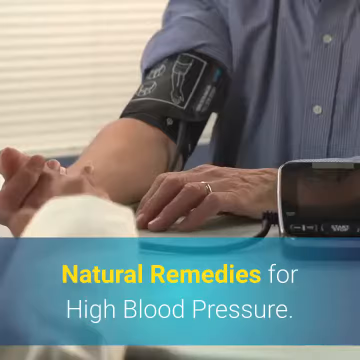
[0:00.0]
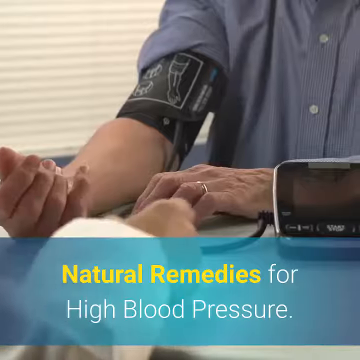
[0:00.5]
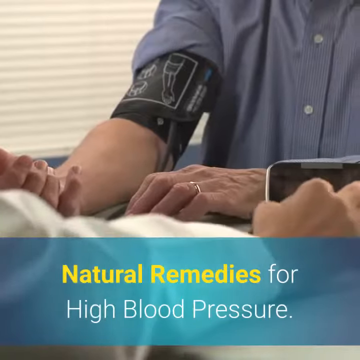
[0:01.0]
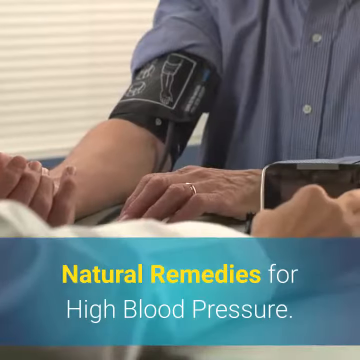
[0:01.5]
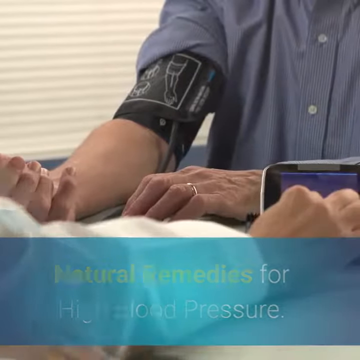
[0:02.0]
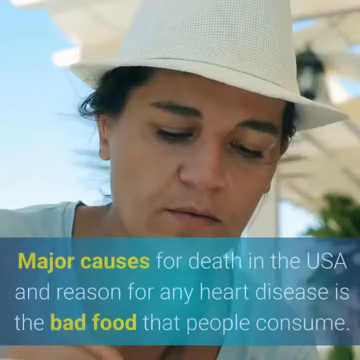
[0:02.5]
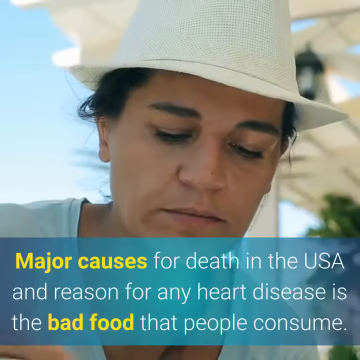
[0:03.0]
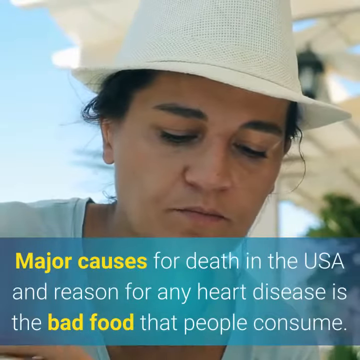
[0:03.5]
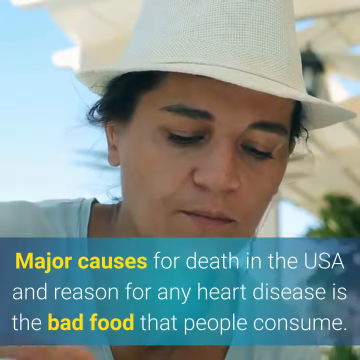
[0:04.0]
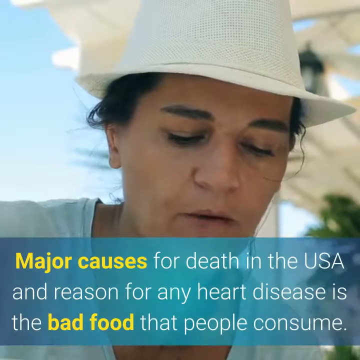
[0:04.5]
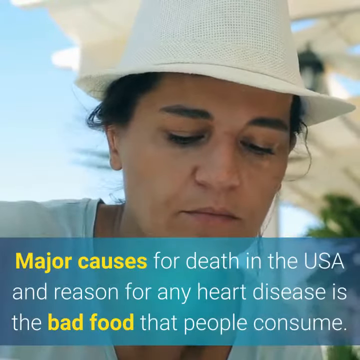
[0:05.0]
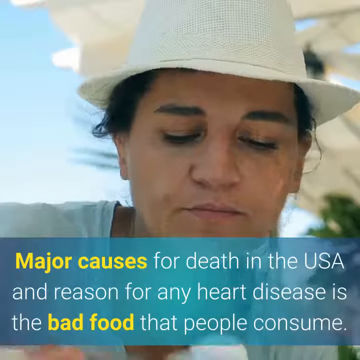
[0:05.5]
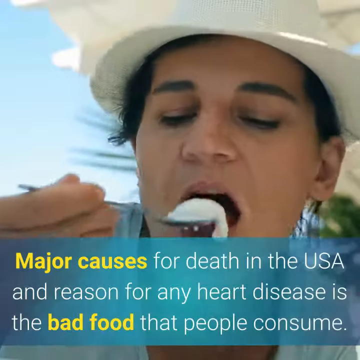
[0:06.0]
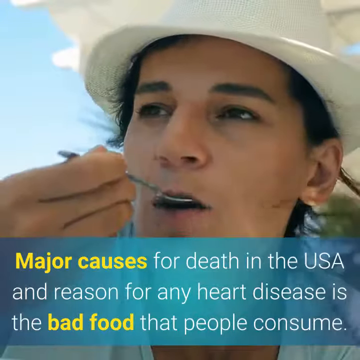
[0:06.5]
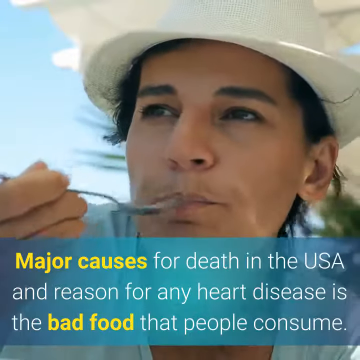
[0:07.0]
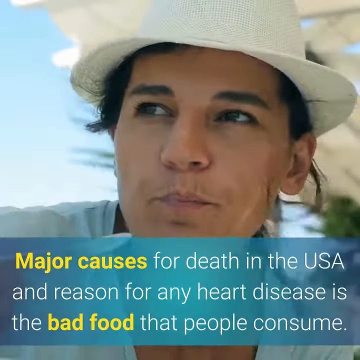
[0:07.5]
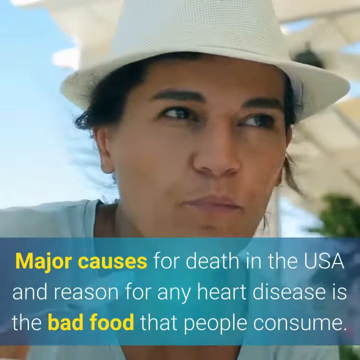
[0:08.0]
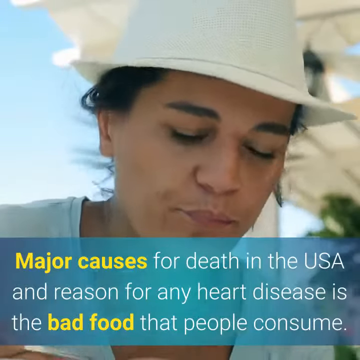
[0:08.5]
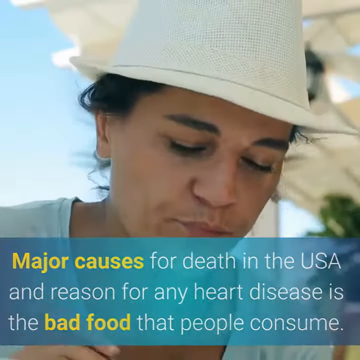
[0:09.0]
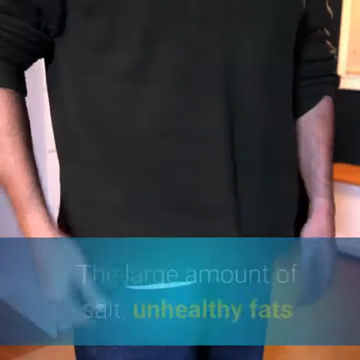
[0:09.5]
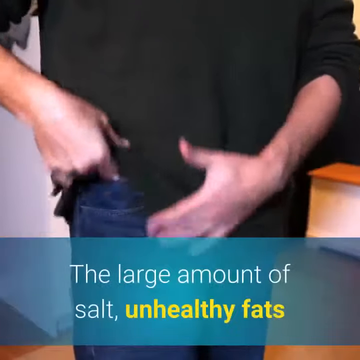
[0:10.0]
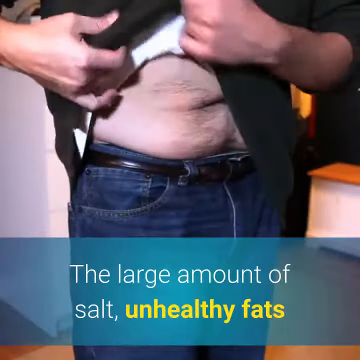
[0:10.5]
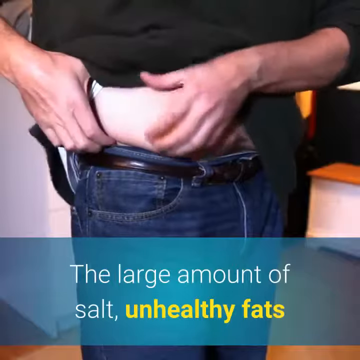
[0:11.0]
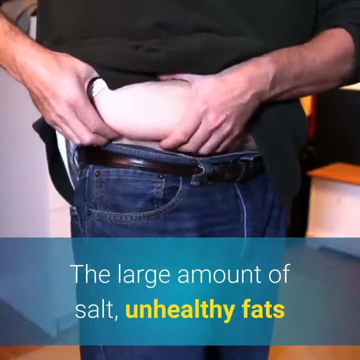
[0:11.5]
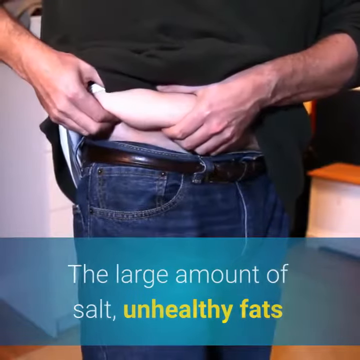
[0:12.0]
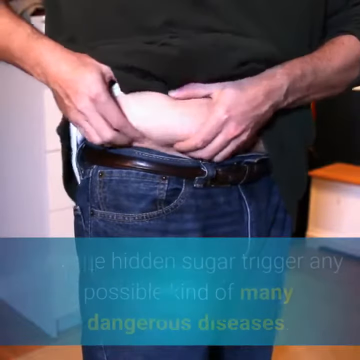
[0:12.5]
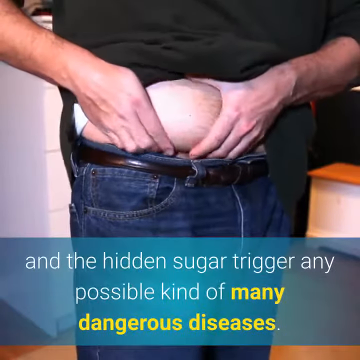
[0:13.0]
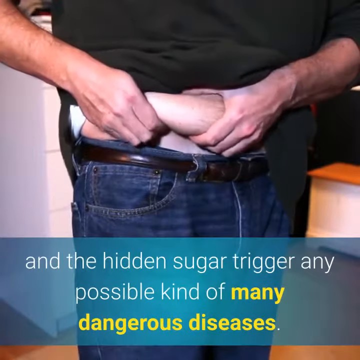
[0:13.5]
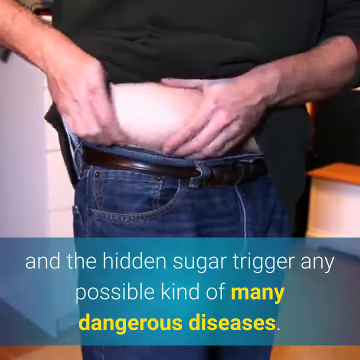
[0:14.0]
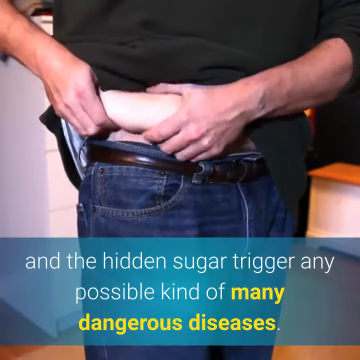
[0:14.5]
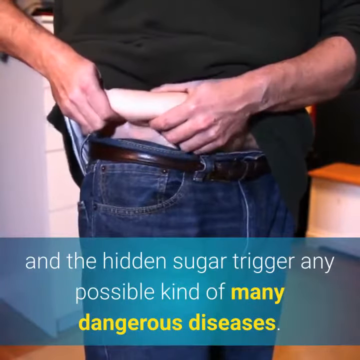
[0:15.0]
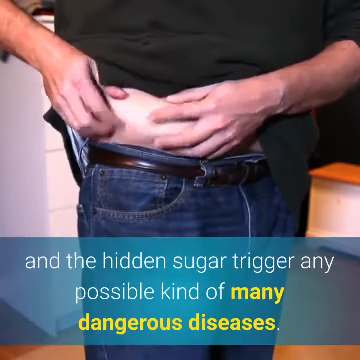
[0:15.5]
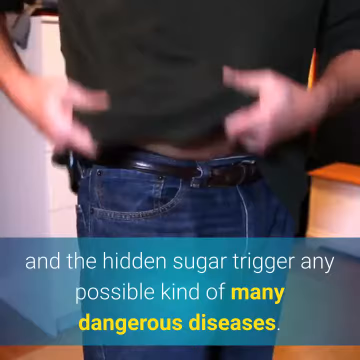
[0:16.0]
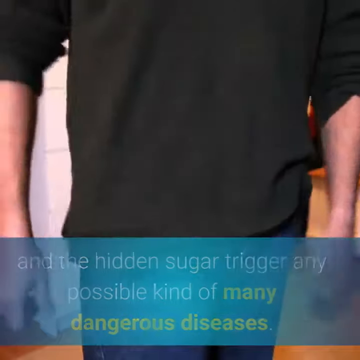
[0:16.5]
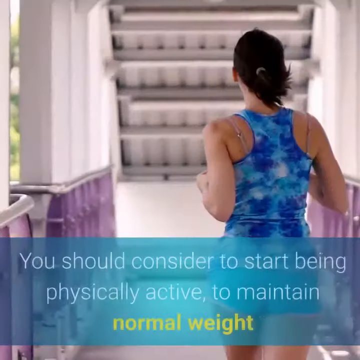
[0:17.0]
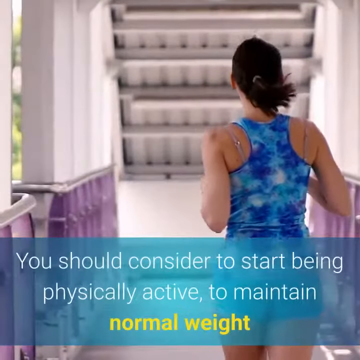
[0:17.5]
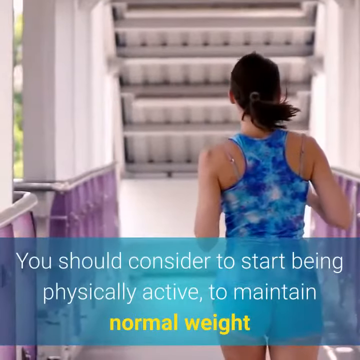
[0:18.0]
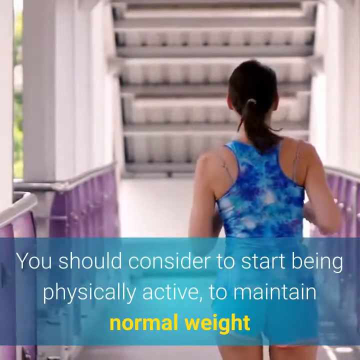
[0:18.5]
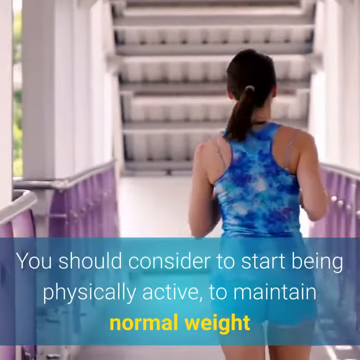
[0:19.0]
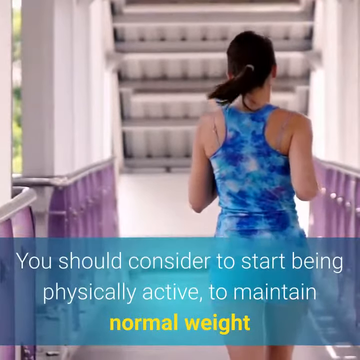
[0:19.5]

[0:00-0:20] A man has a blood pressure machine on him. He wears a brown button-up shirt, and his hands are visible on the table, but his face is not. A little device is lying on the table too. A blue banner with white and yellow text reads "natural remedies for high blood pressure," and a doctor's arm seems to come into view as a screen then lights up. Next, a woman in a white hat is outside, with trees in the background. A blue banner with white and yellow text reads "major causes for death in the USA and reasons for any heart disease is the bad food that people consume," and she is eating what looks like yogurt while the wind blows her hair. Then a man in a black sweatshirt lifts up his shirt, seemingly to show his stomach and the fat that folds over his pants. A blue banner with white and yellow text reads "the large amount of salt, unhealthy fats and the hidden sugar trigger any possible kind of many dangerous diseases. You should consider to start being physically active to maintain normal weight." A girl in a blue tie-dye shirt, her hair pulled back in a ponytail, runs in slow motion; she is very fit.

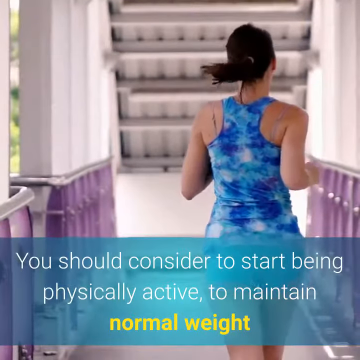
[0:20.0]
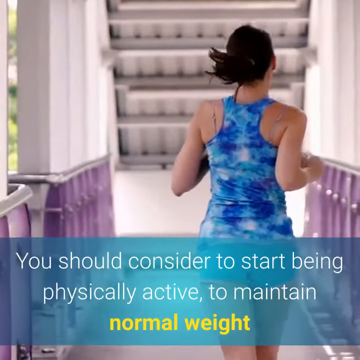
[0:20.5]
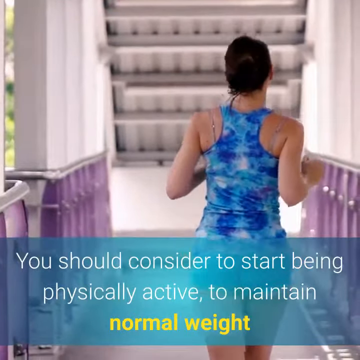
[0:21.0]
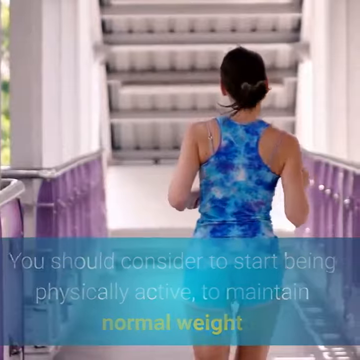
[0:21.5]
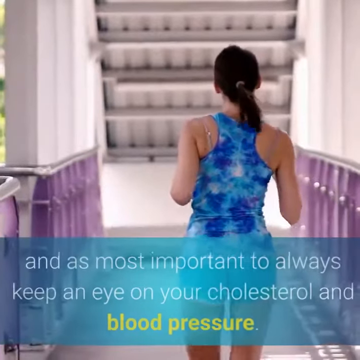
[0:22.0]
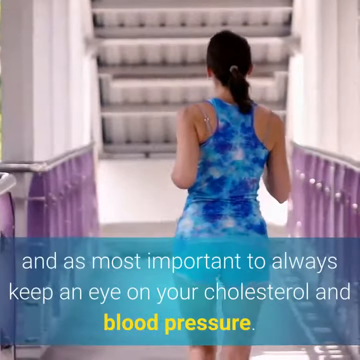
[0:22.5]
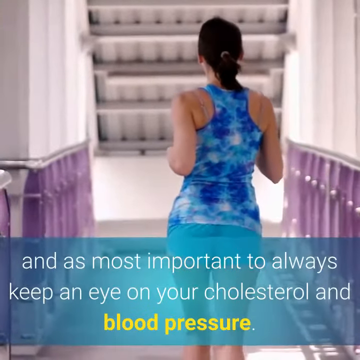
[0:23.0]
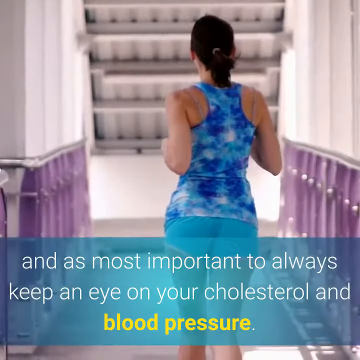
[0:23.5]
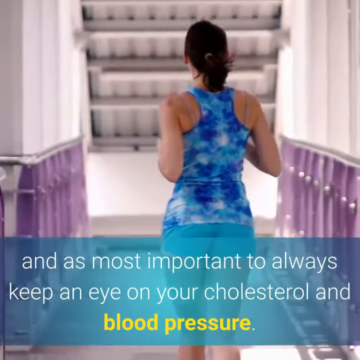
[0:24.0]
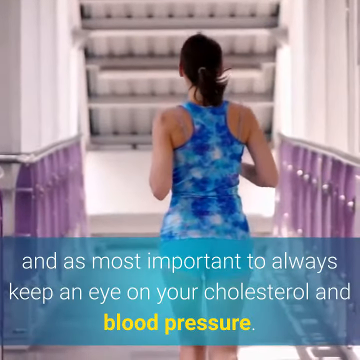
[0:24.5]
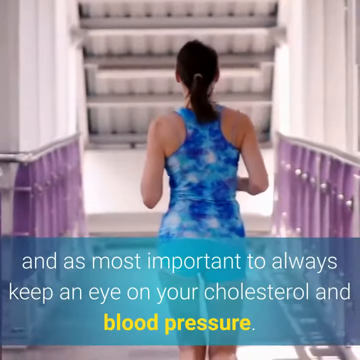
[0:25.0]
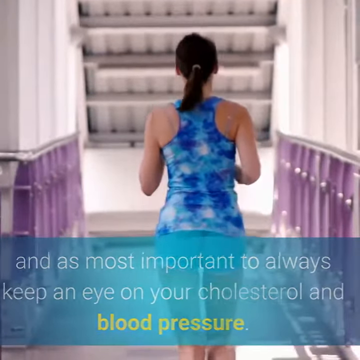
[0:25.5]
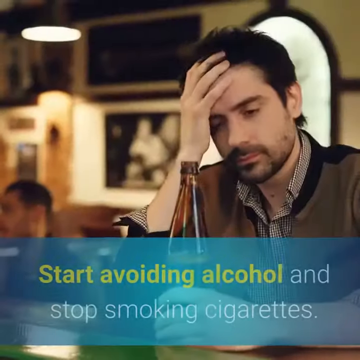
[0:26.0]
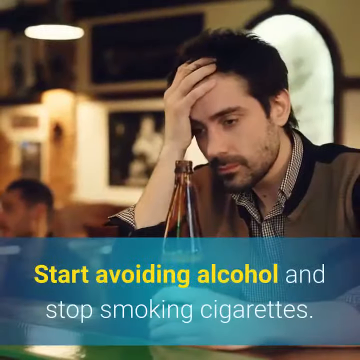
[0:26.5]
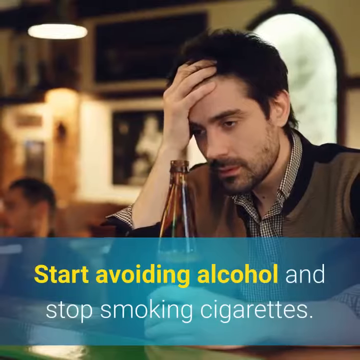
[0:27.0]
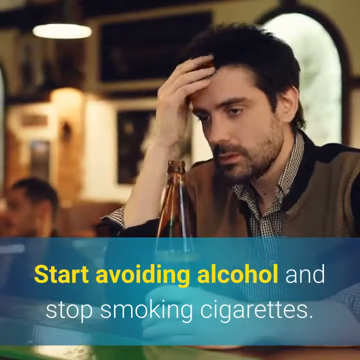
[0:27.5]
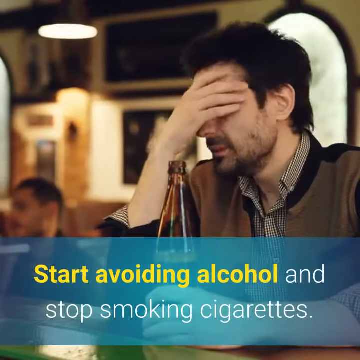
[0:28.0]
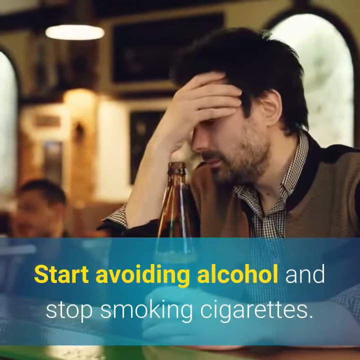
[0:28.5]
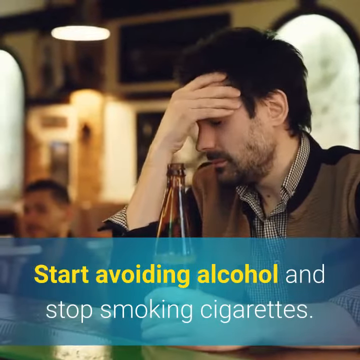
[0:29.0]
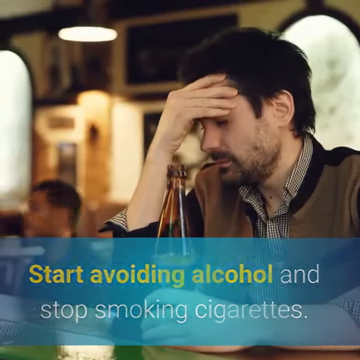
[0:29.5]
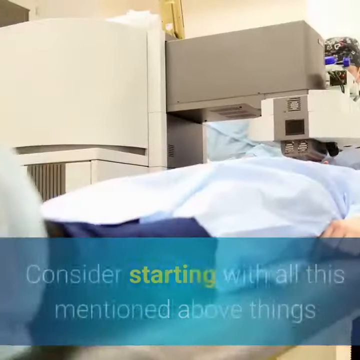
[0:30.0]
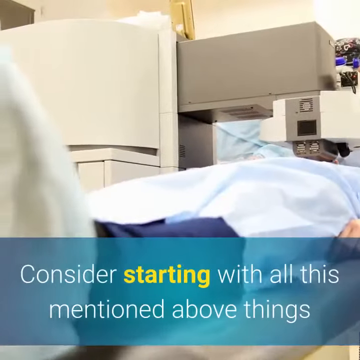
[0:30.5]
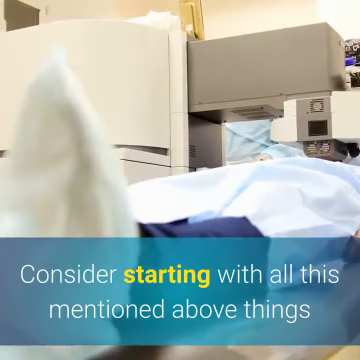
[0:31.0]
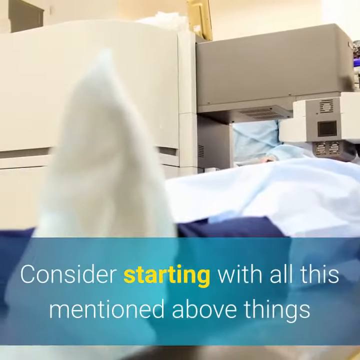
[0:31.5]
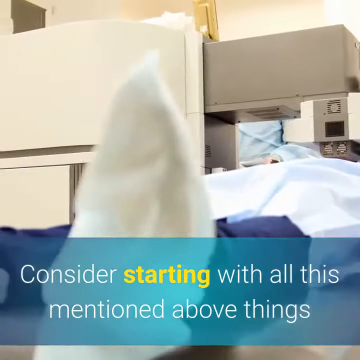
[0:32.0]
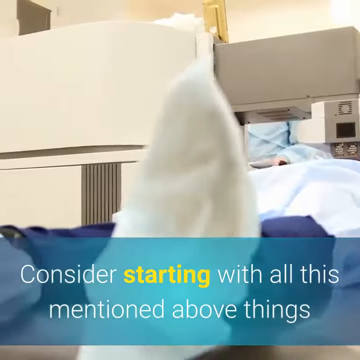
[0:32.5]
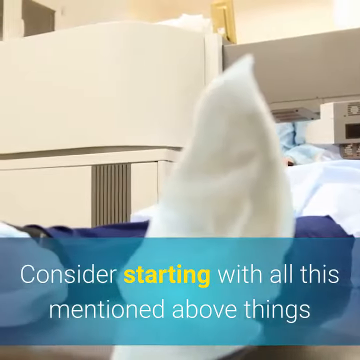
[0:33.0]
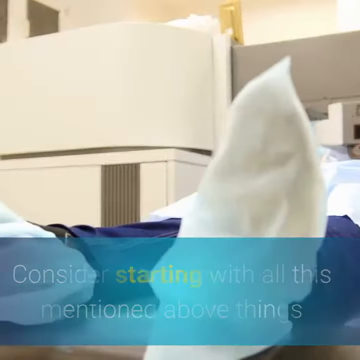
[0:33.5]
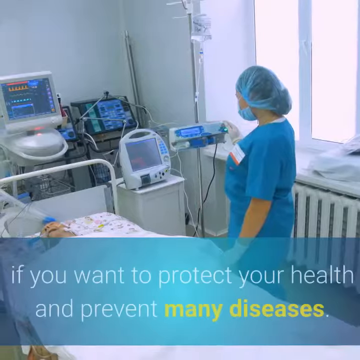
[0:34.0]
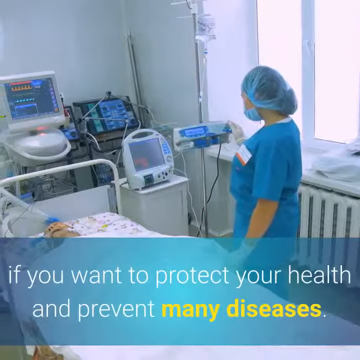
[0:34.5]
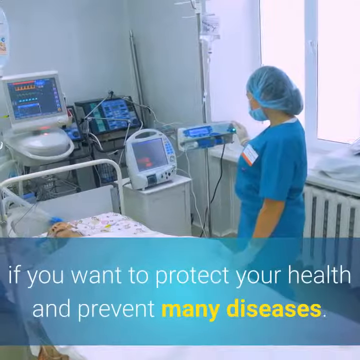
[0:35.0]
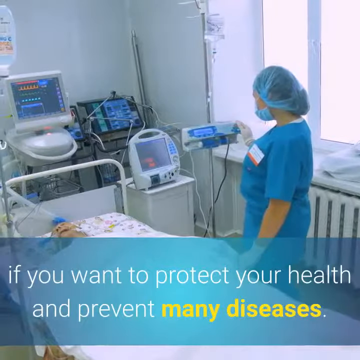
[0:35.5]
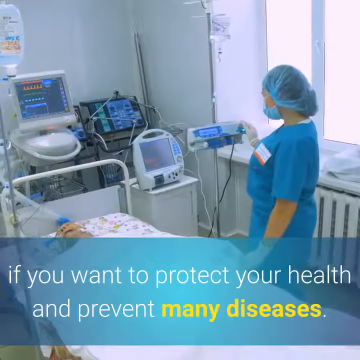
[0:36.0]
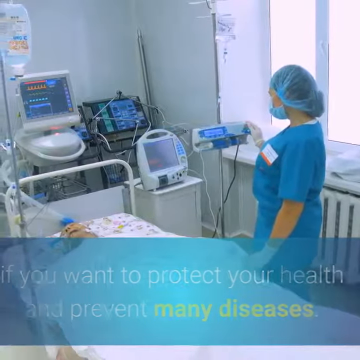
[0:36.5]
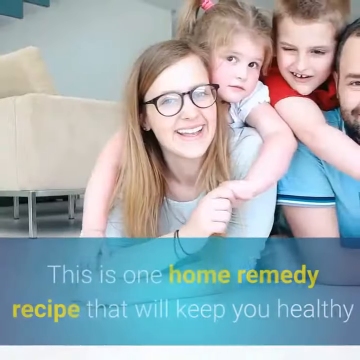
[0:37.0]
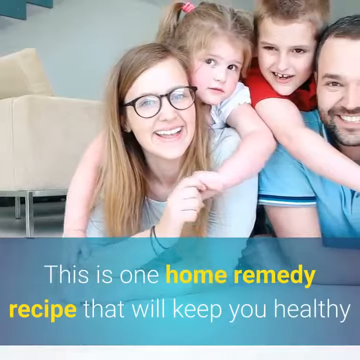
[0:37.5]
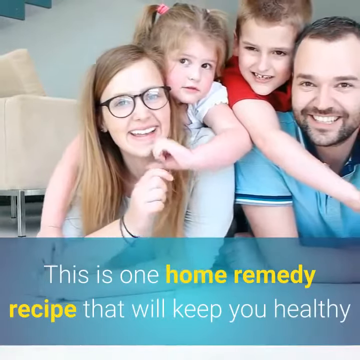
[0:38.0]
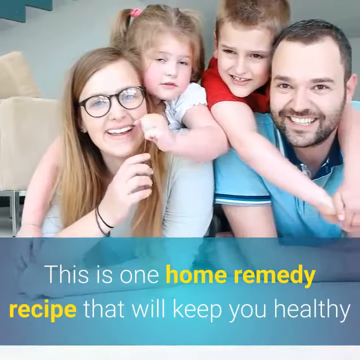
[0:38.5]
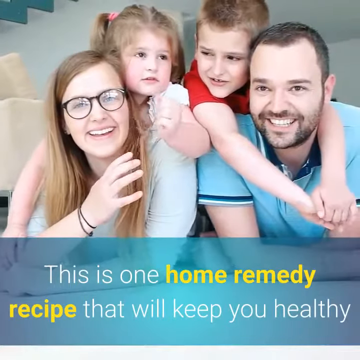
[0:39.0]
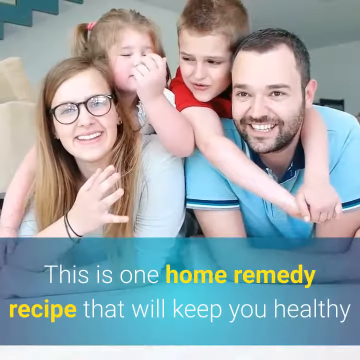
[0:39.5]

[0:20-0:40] A woman in tie-dye, apparently a tie-dye tank, with her hair pulled back in a ponytail, runs in slow motion under a blue banner with white and yellow text reading "you should consider to start being physically active to maintain normal weight." Additional text appears: "and as most important, to always keep an eye on your cholesterol and blood pressure," with "blood pressure" bolded and in yellow. A man in a bar has a drink, and a blue banner with white and yellow text reads "start avoiding alcohol and stop smoking cigarettes." He looks somewhat disappointed and upset, with his hand on his face, looking down. Next, a person is lying down in a hospital room, with a blue banner with white and yellow text reading "consider starting with all this mentioned above things." The camera moves somewhat downward toward the end of this shot. The video transitions to a nurse in a nurse outfit, a head covering and a mask, with a person lying in a bed. A blue banner with white and yellow text reads "if you want to protect your health and prevent many diseases, this is one home remedy recipe that will keep you healthy." A family of four appears: a woman and a man with two children kind of hanging over them, all smiling for the camera.